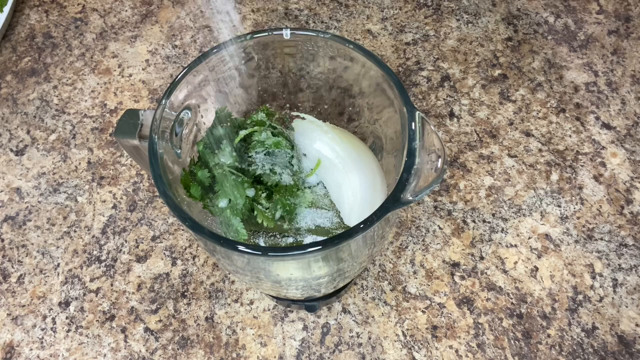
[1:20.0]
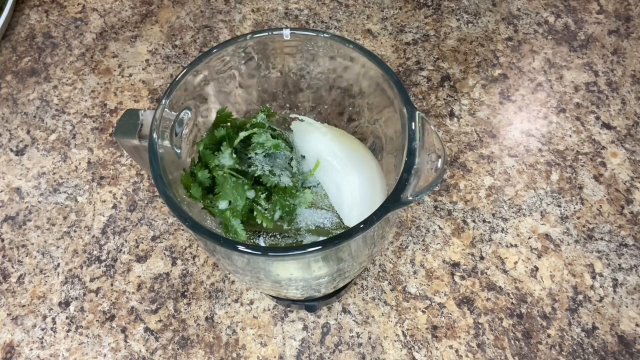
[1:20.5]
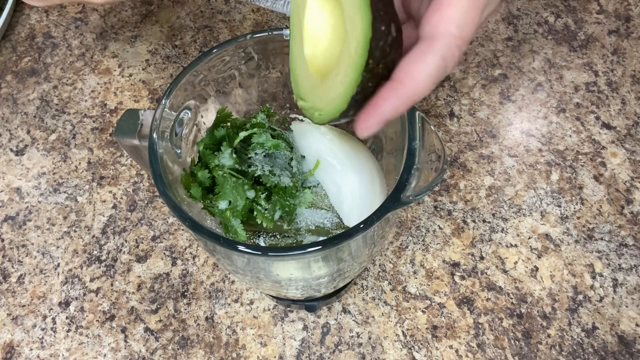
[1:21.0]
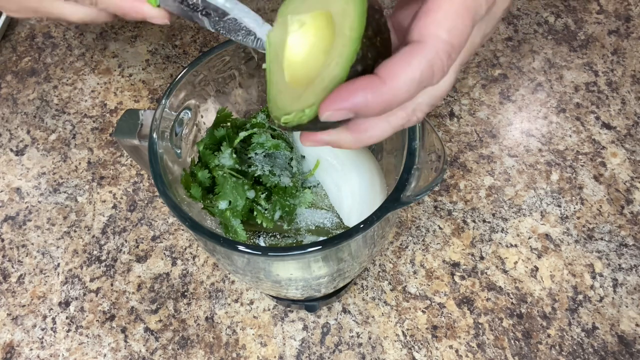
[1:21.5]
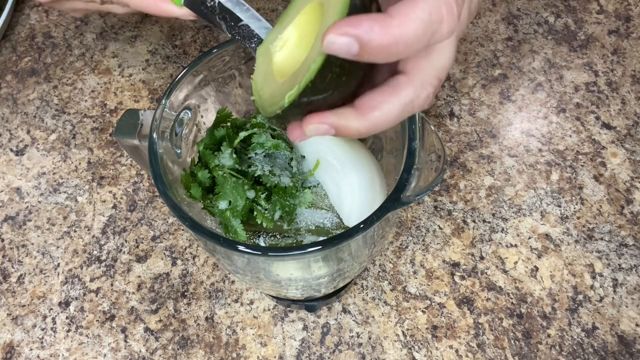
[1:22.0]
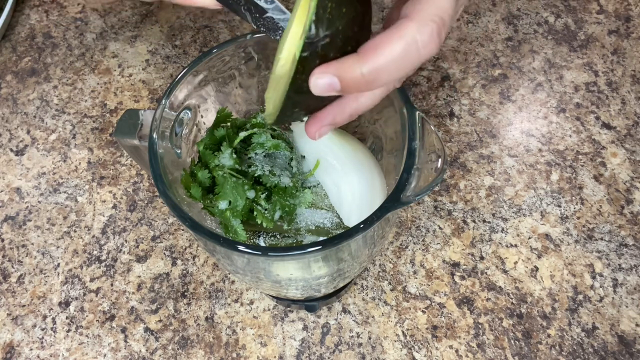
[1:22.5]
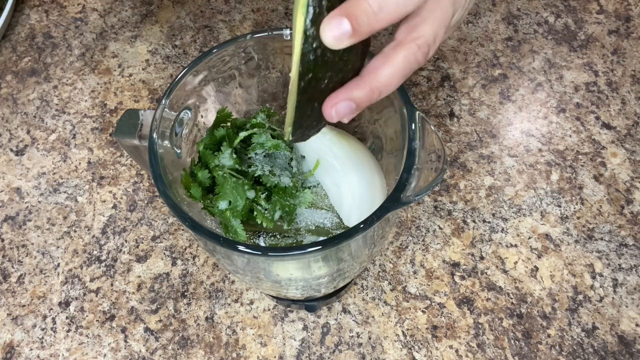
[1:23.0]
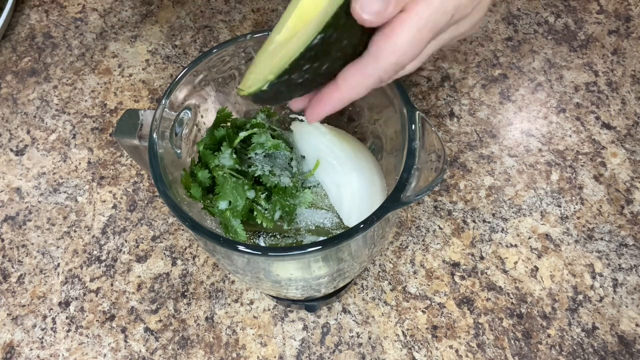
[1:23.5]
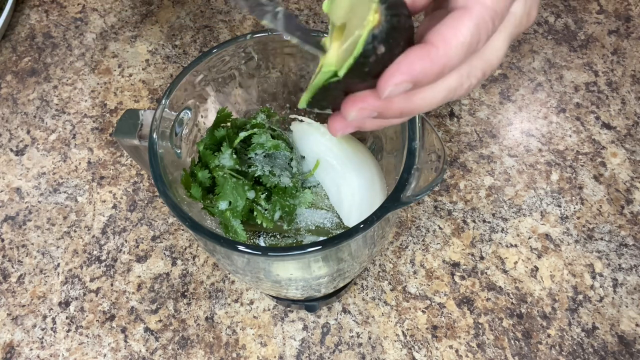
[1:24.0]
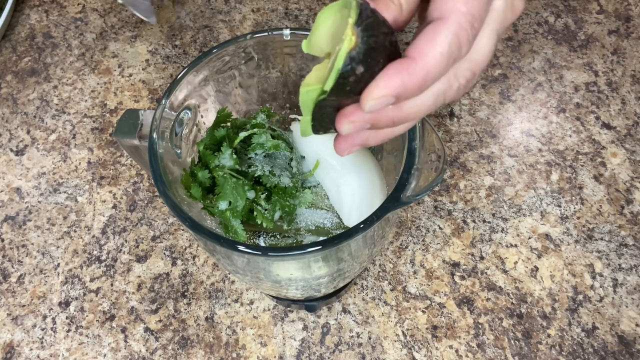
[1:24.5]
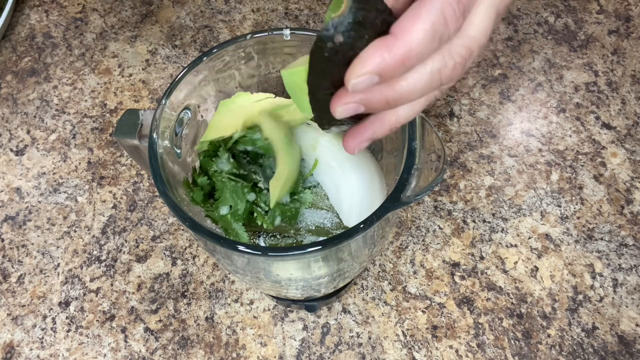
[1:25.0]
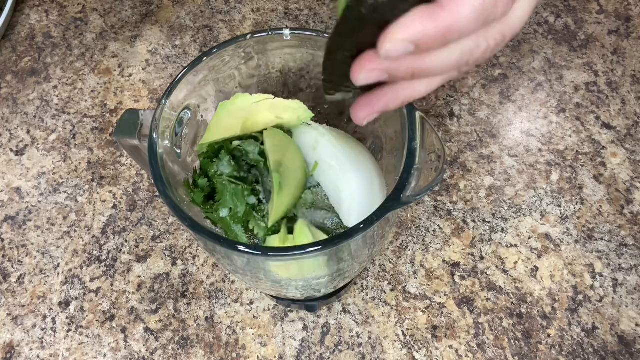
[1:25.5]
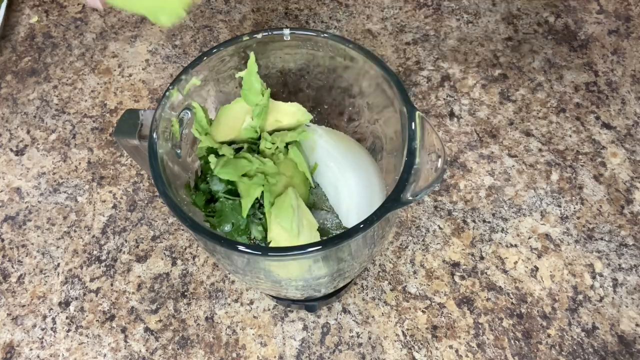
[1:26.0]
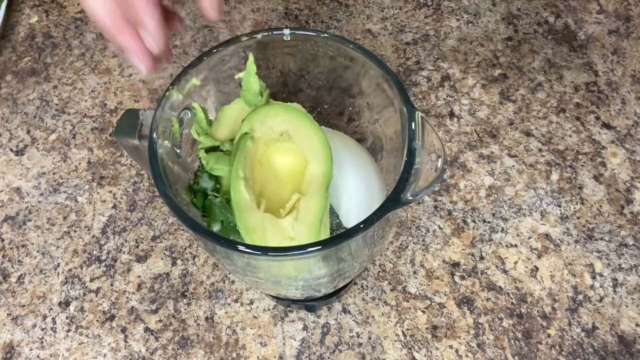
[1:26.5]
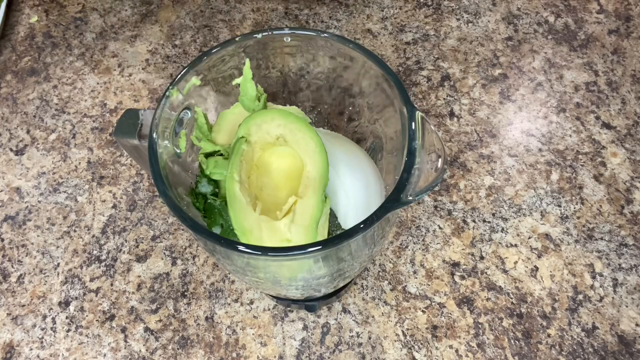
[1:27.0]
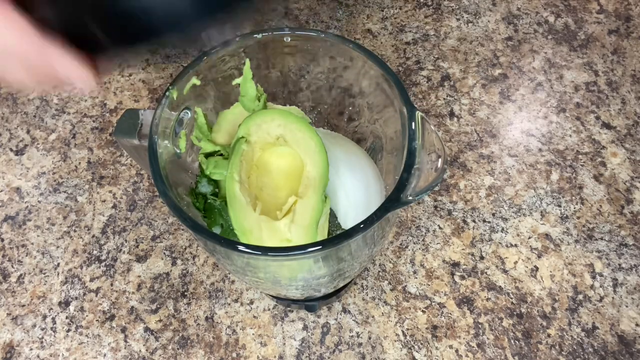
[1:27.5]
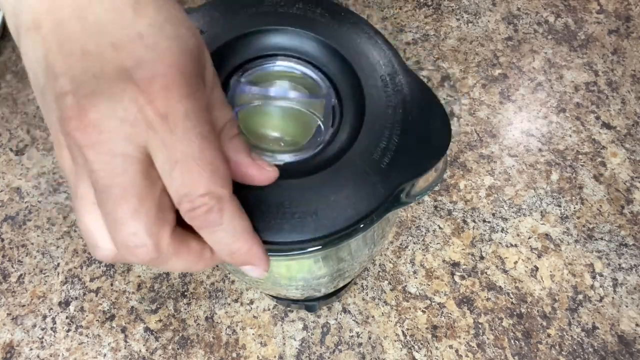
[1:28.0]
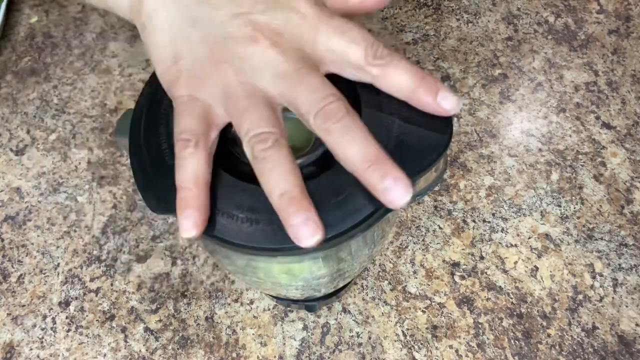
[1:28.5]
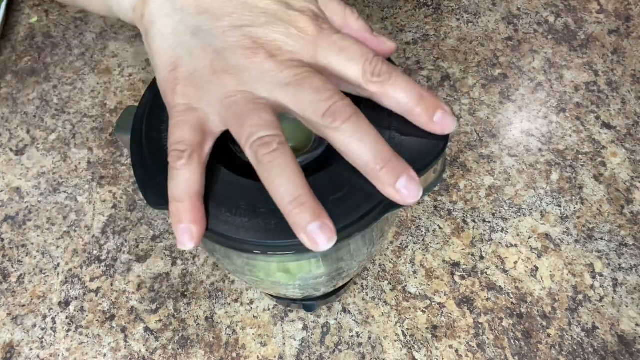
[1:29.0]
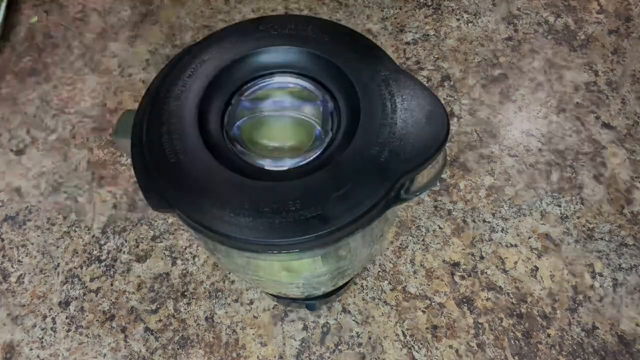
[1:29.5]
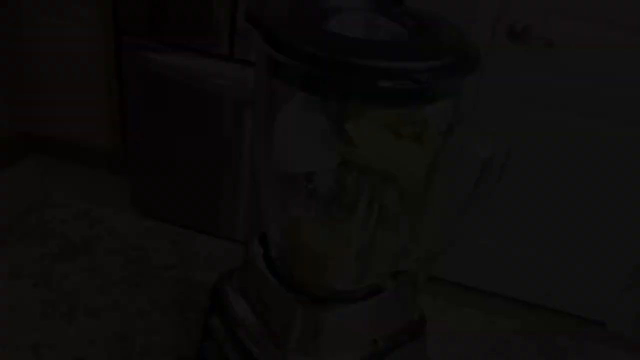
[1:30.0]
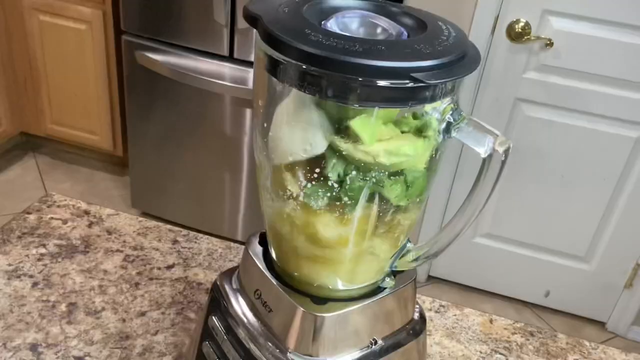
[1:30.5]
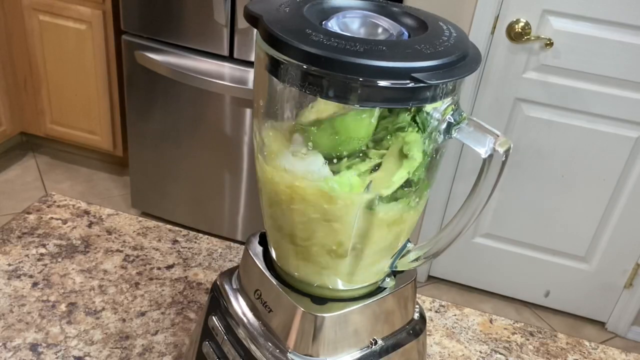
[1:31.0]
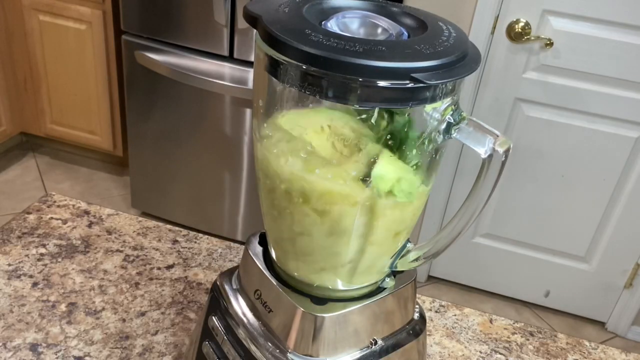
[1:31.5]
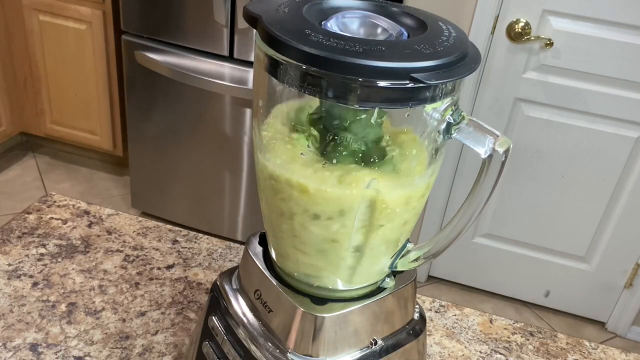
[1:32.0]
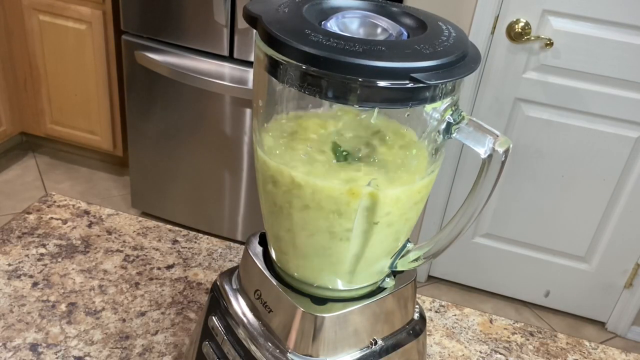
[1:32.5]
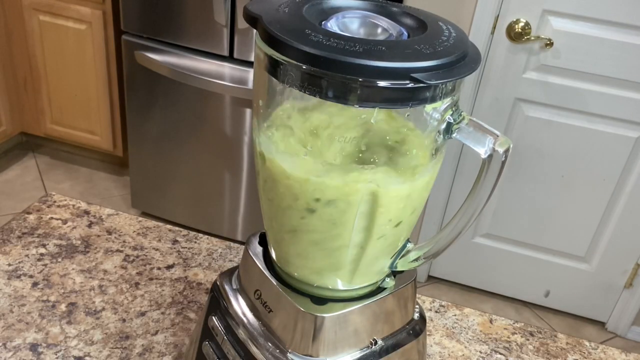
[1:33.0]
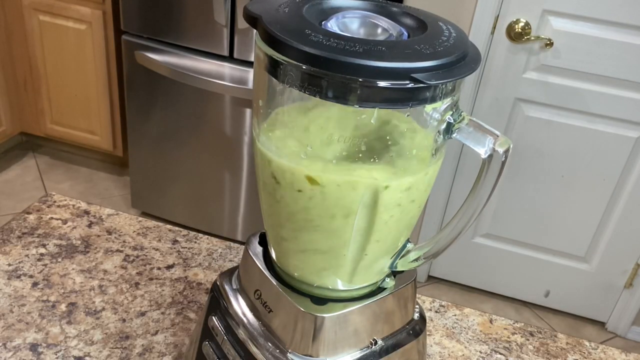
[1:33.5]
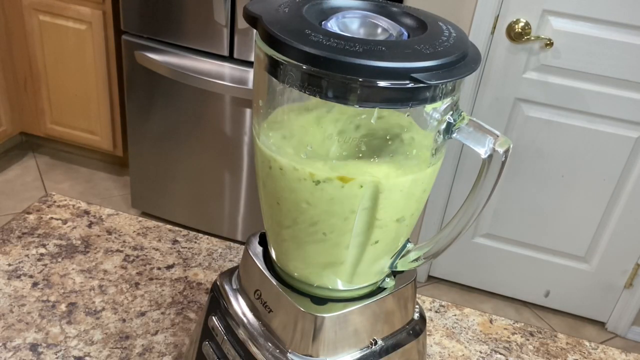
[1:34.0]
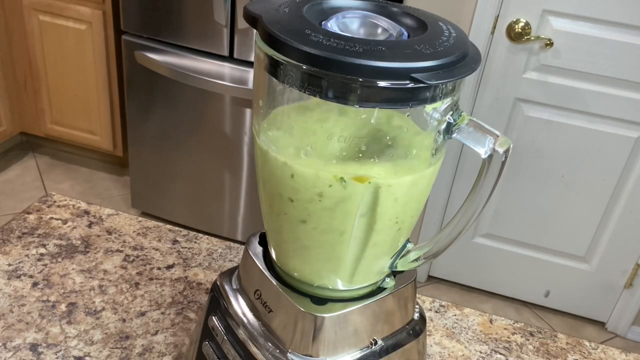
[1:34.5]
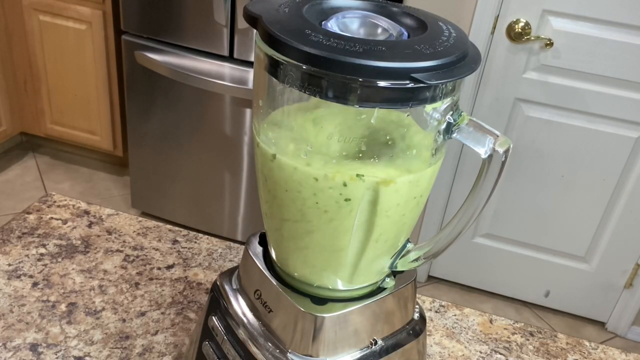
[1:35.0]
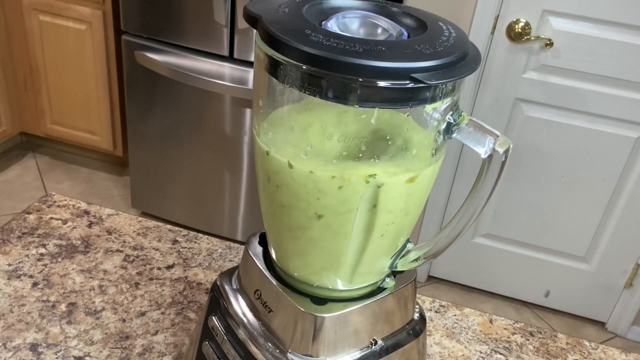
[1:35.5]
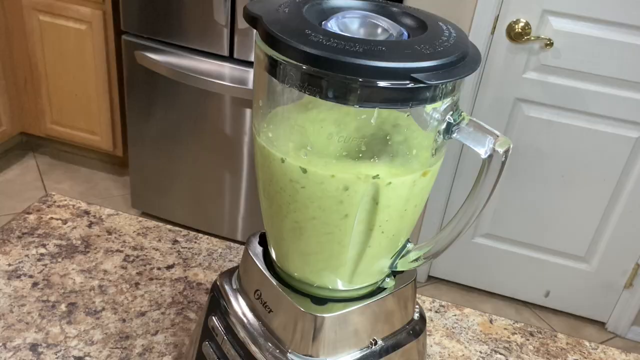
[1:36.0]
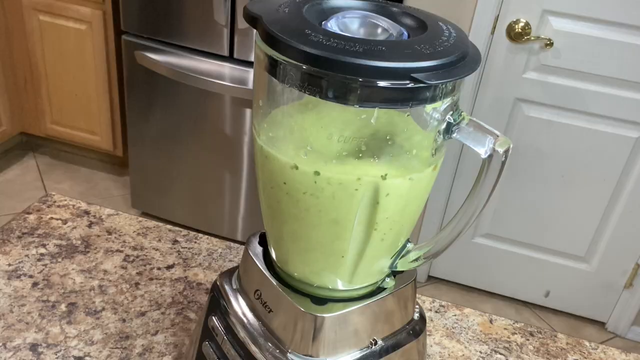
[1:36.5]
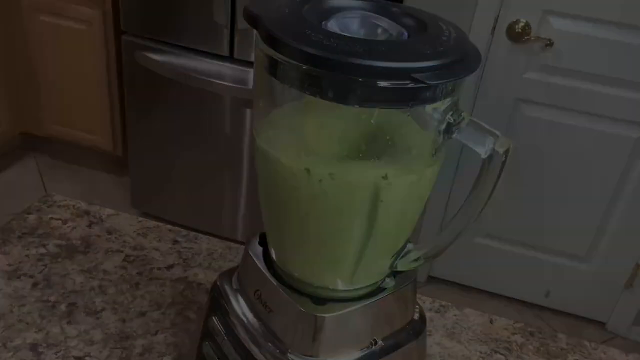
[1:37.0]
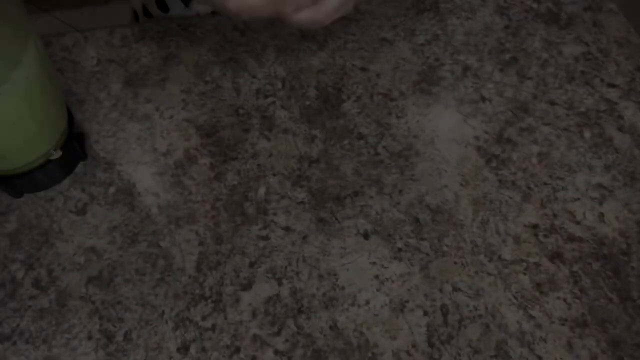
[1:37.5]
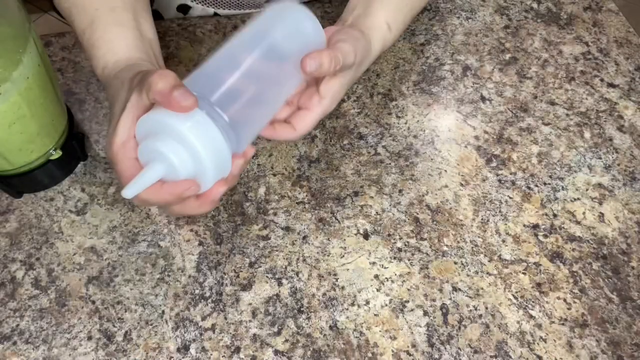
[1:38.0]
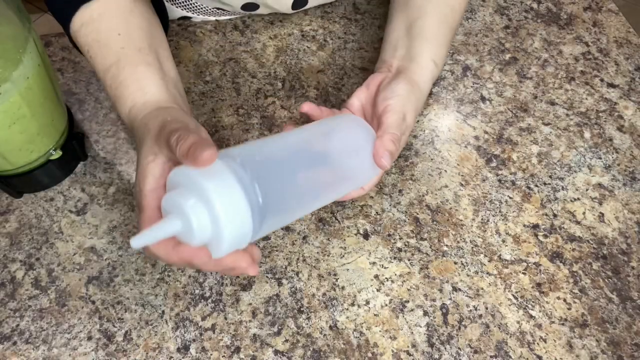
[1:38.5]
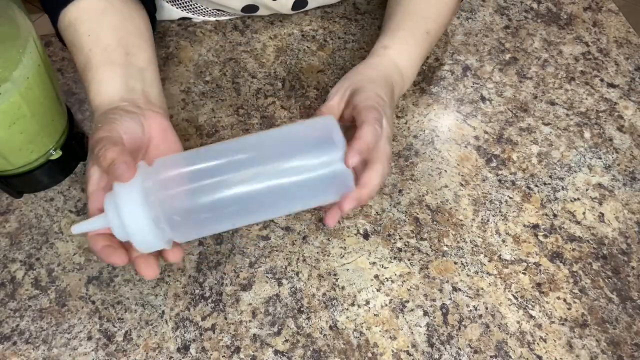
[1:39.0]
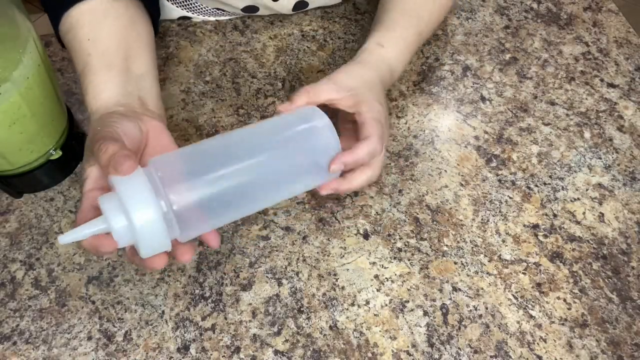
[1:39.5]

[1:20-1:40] A glass cup containing green vegetables and a white onion is on a ceramic tile. From the top left, a person pours salt into the glass cup. With their left hand they show a peeled avocado; using their right hand, they cut off the left side of the avocado and empty the rest of it into the meal. They then take the skin of the avocado with their left hand and drop the remaining portions of the avocado into the meal. With their right hand, they cover it with a plastic cup. The scene transitions to a blender, which blends all the ingredients. The scene then shows someone holding a plastic cup with a white tip at the end, gripping it with both hands.